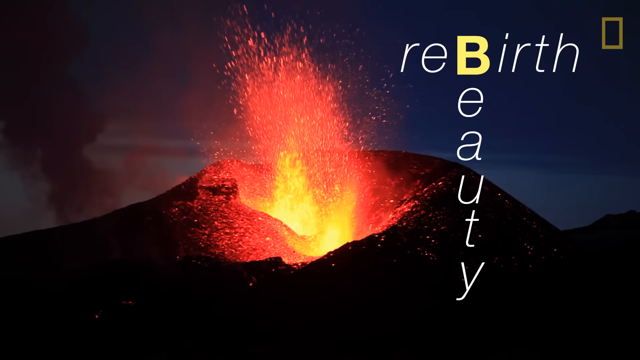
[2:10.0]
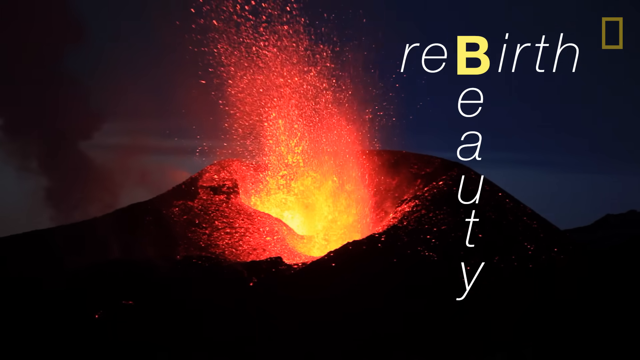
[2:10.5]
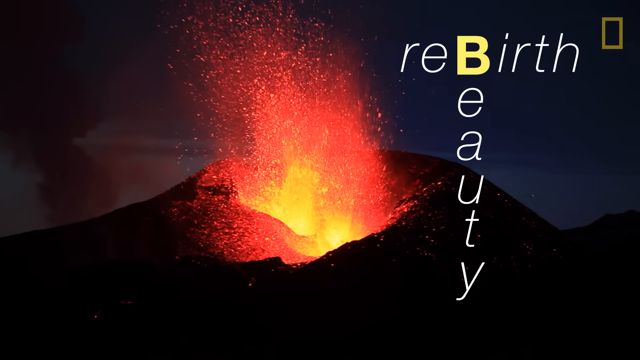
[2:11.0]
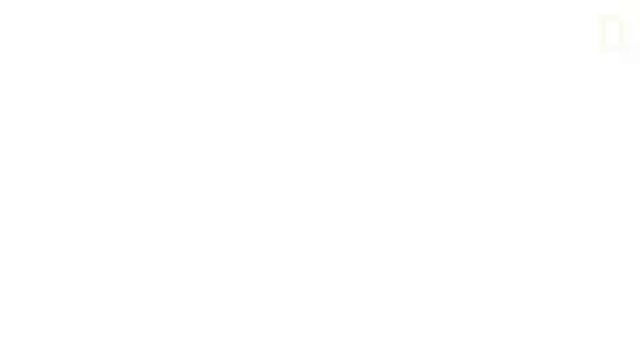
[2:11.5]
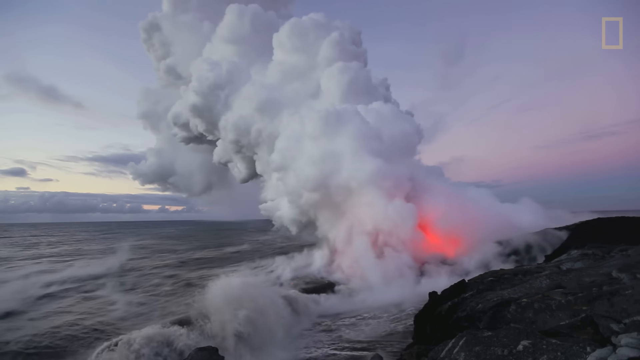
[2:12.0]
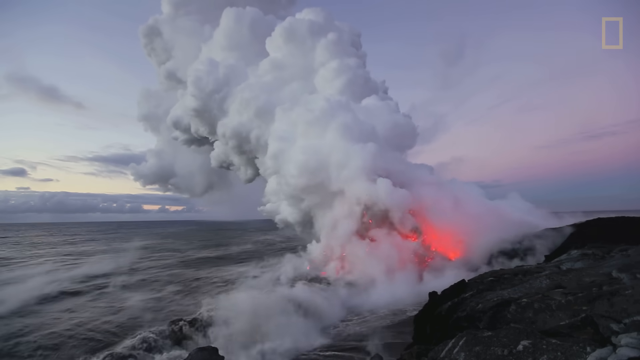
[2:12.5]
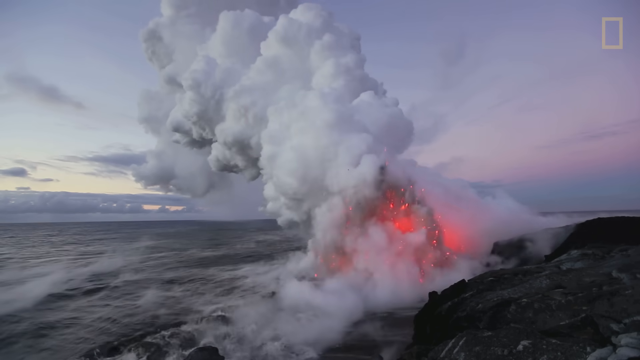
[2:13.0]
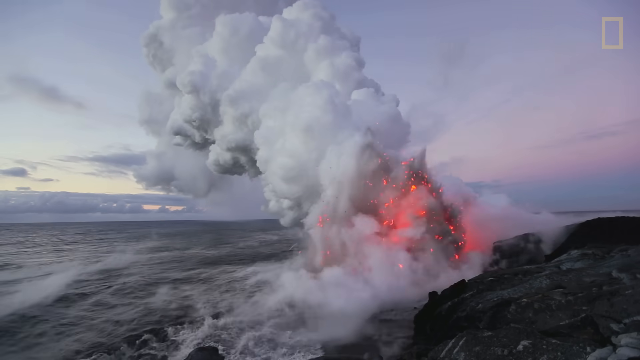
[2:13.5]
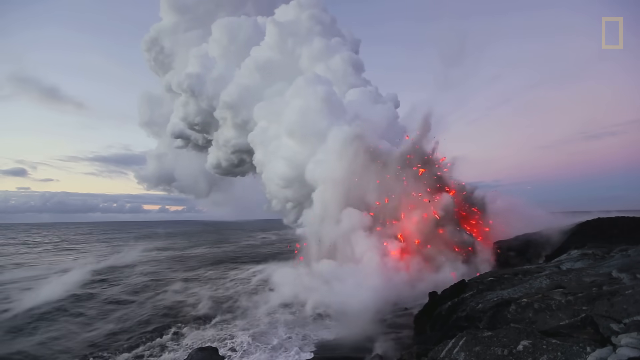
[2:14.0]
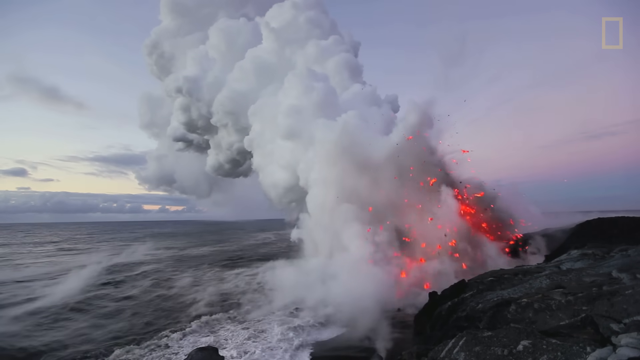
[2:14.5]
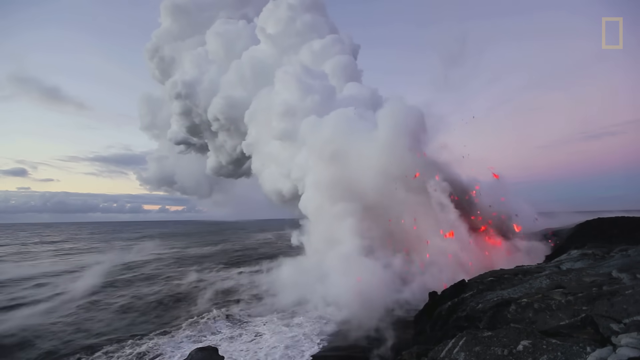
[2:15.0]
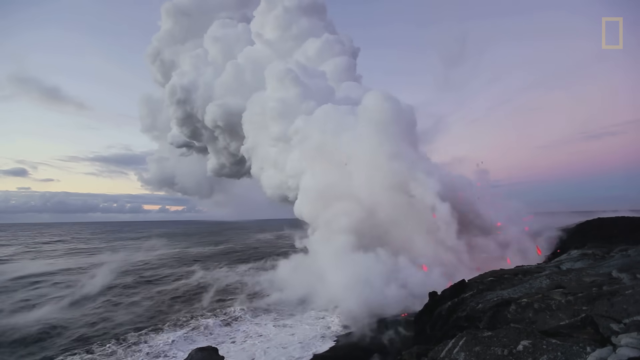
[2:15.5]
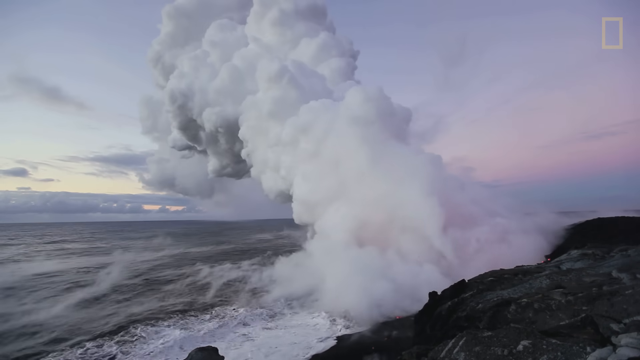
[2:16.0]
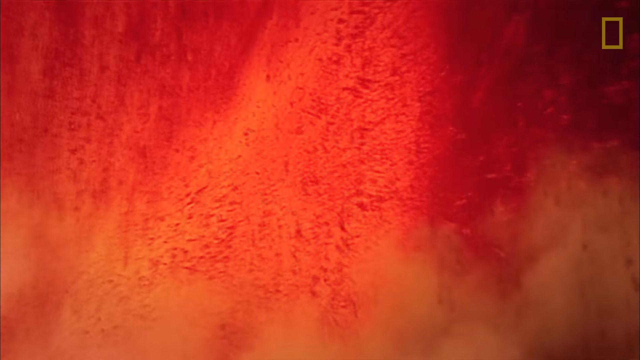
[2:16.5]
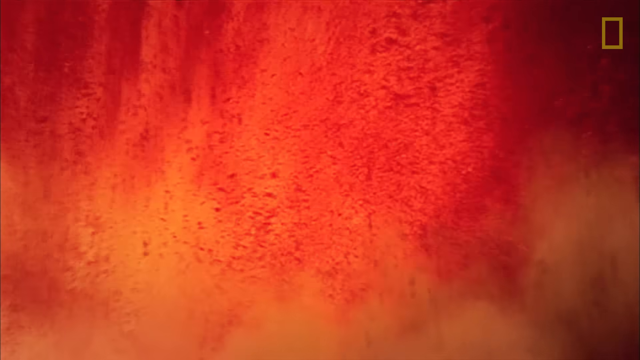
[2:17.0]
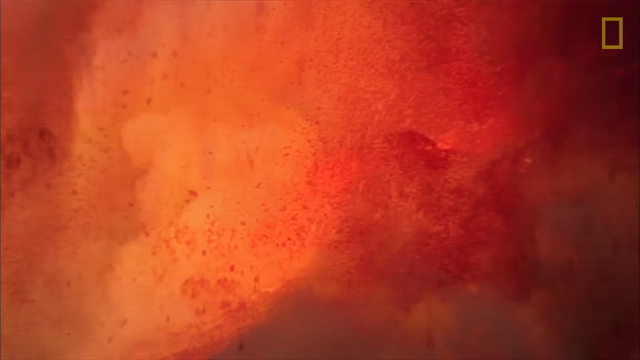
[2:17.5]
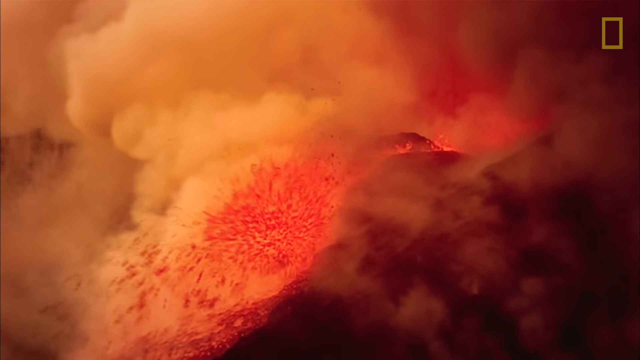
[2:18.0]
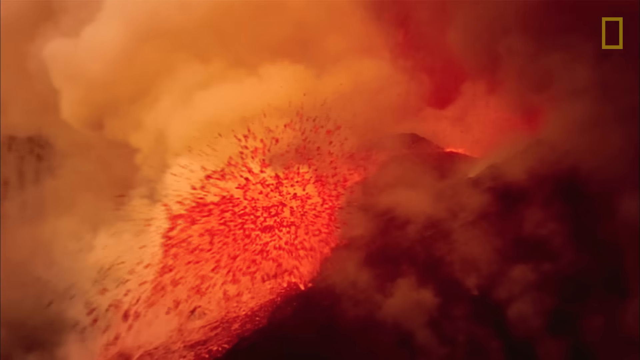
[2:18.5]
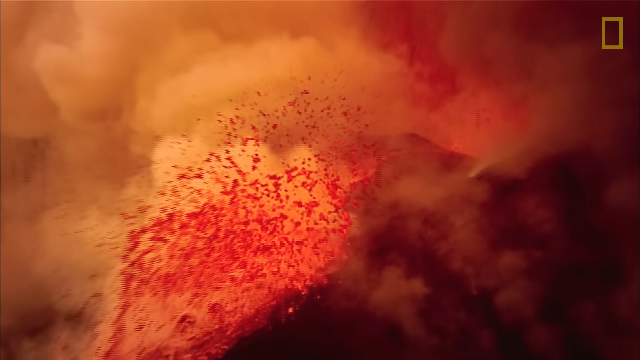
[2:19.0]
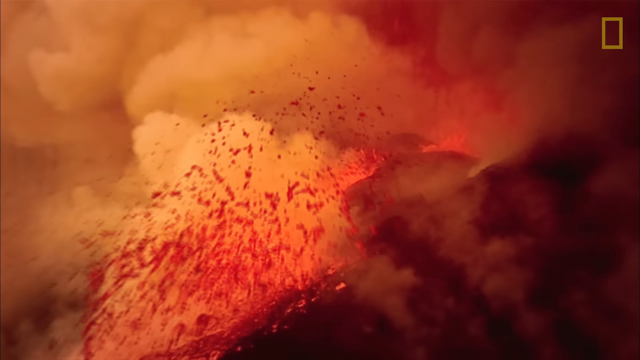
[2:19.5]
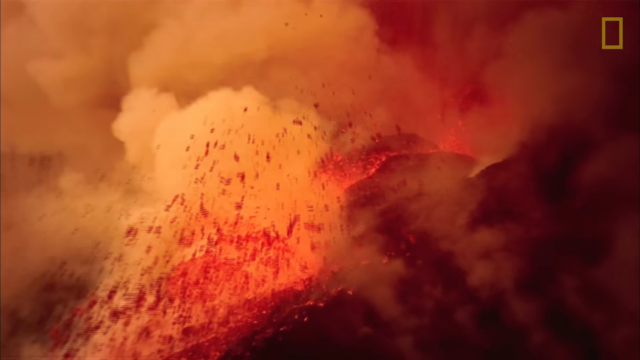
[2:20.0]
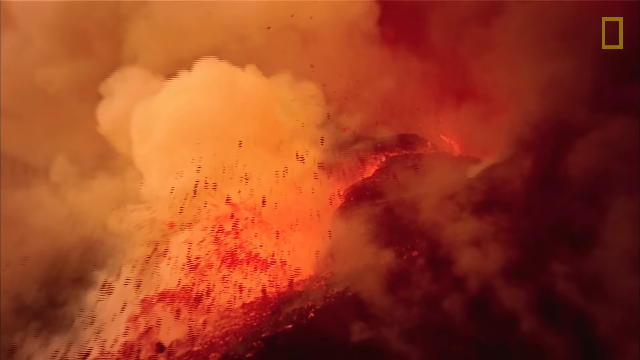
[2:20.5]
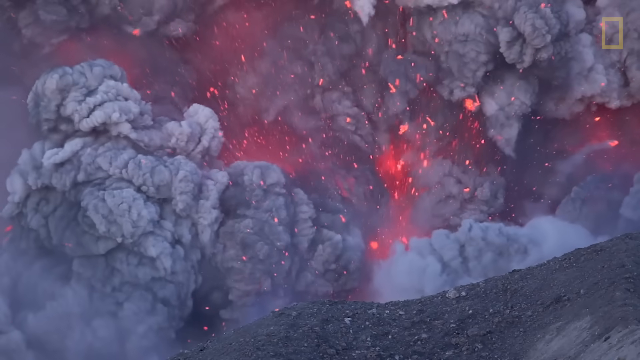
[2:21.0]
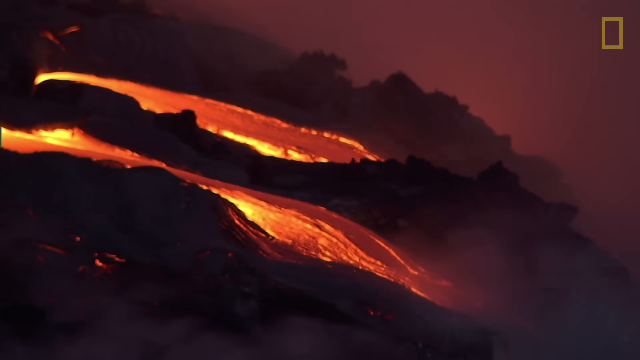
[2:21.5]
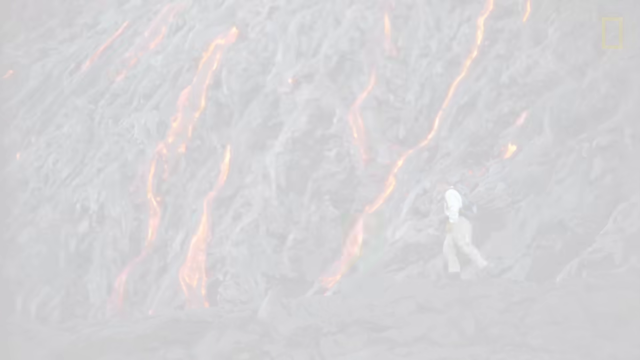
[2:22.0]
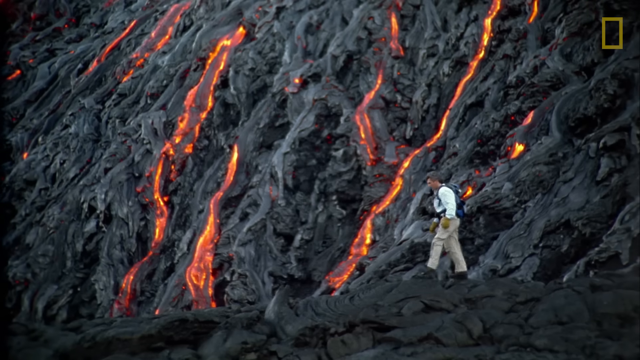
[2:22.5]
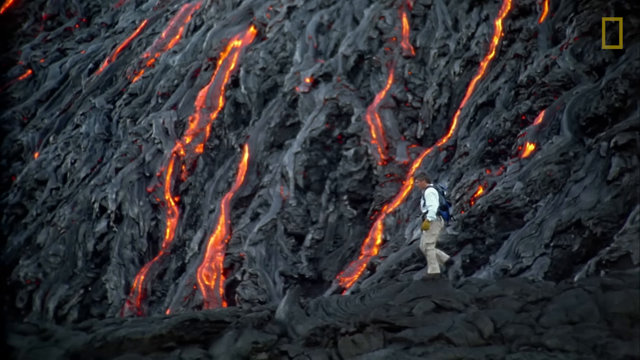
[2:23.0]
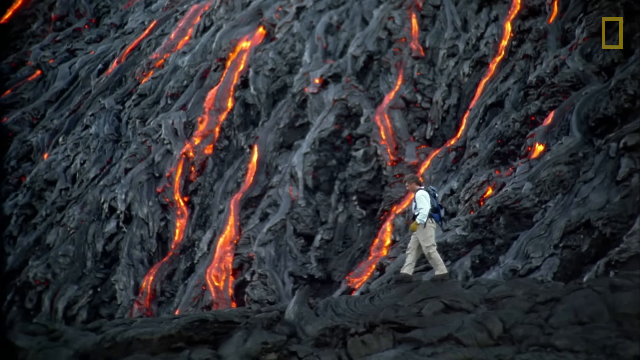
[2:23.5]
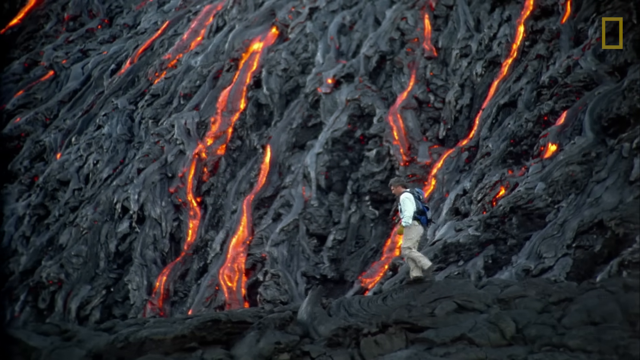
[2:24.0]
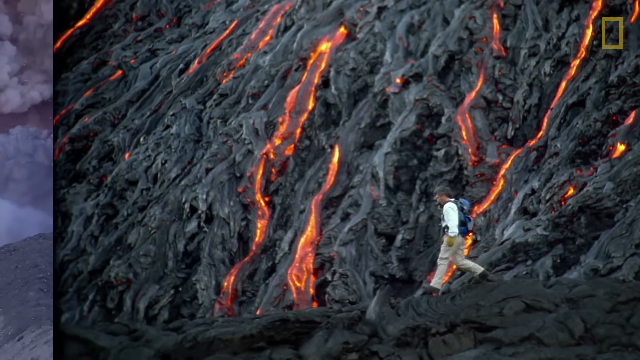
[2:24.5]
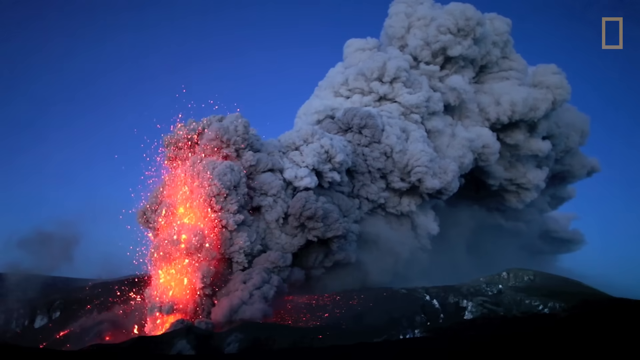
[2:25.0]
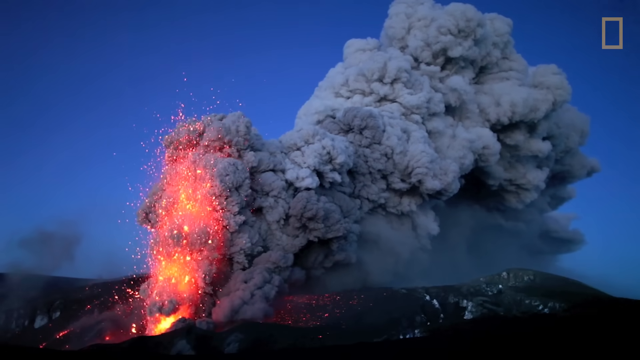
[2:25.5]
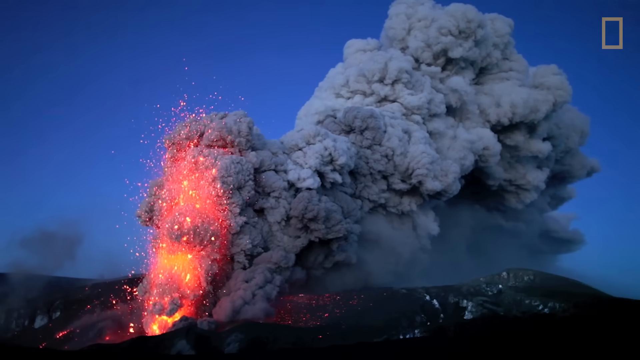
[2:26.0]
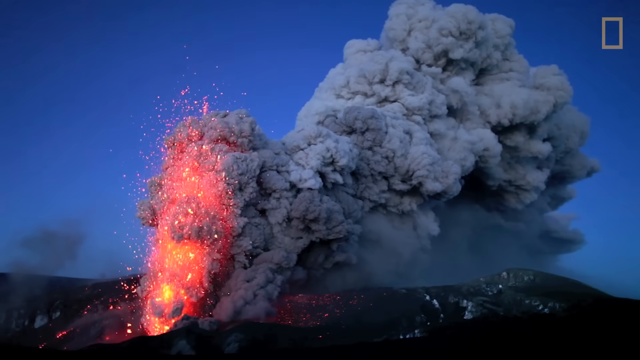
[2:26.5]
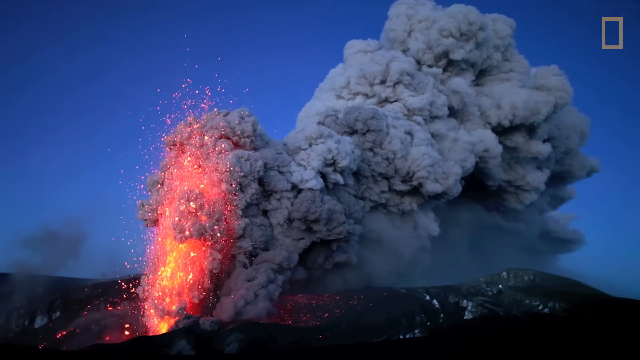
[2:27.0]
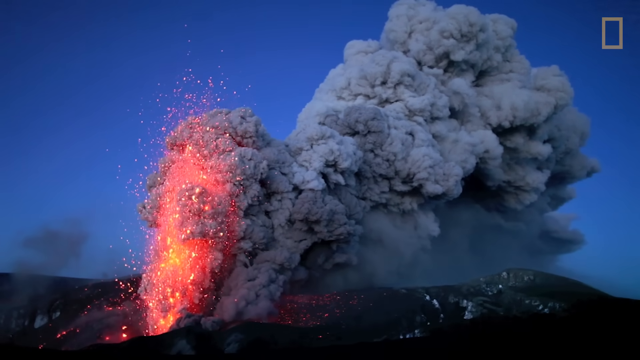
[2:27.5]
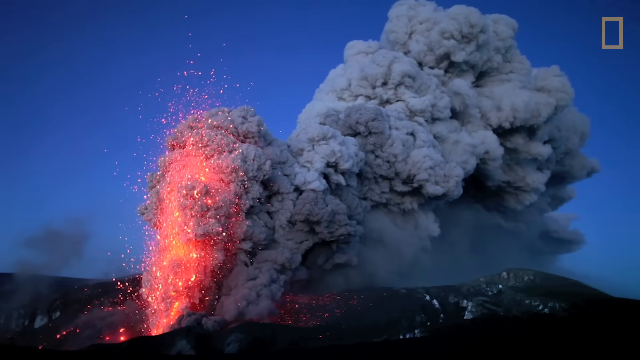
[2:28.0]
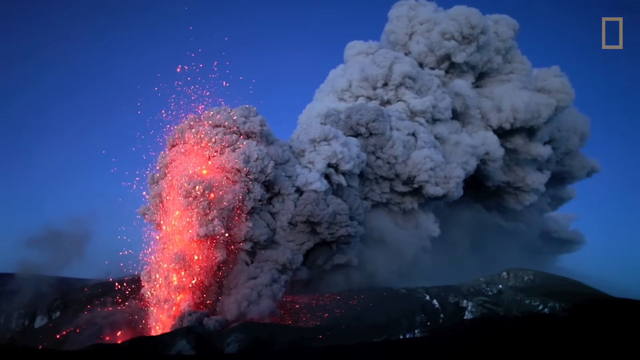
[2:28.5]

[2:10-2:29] At nighttime, the side of the volcano is dark black as lava continues shooting up high, 40 feet in the air. Next, water covers the left side up to about the midway point, with huge rolling white and slightly gray smoke going up to the left. In the center, red and orange sort of bubble and smoke up, with a little bit of land to the right and a skyline in the background. A very close-up shot shows lava exploding, mostly yellowish orange in the center and more red at the sides and top. Another shot shows lava exploding in the middle with smoke across the top, whiter on the left side and darker on the right. A few more explosions of lava shoot up with smoke boiling around. Two yellow streams run from the left down to the right, like rivers of lava flowing down. In the bottom right, a man walks to the left on the side of a mountain that is mostly solidified lava, with a couple of spots where red and yellow lava runs down. Another big explosion occurs at the bottom, just left of center, and up to the right is huge gray smoke against a dark blue sky.